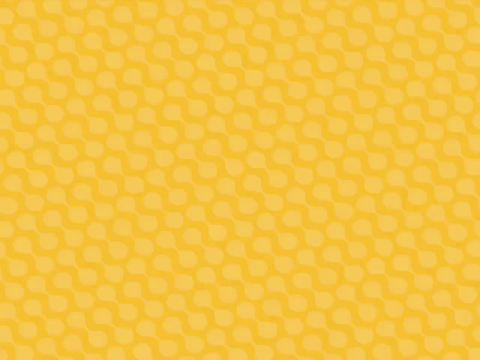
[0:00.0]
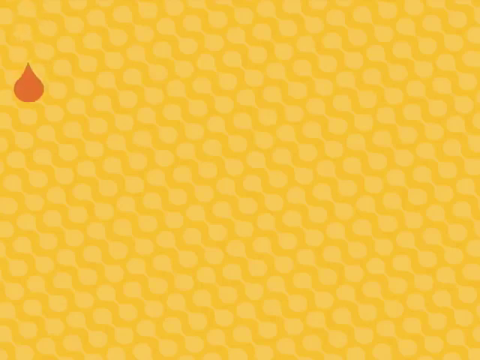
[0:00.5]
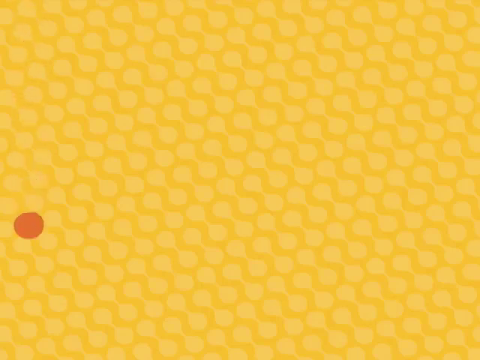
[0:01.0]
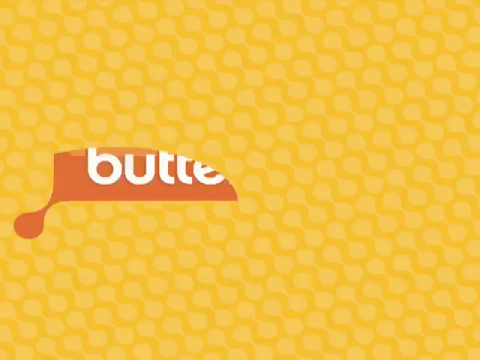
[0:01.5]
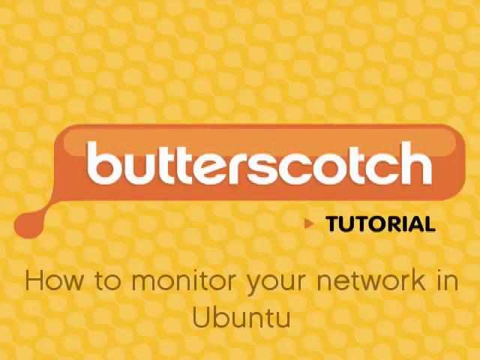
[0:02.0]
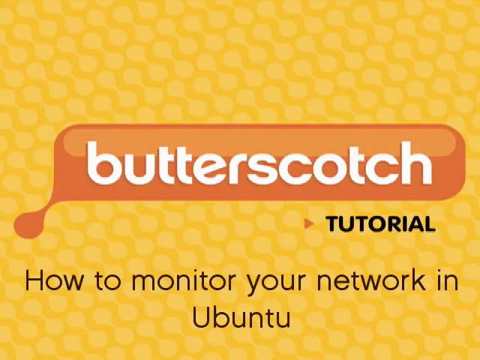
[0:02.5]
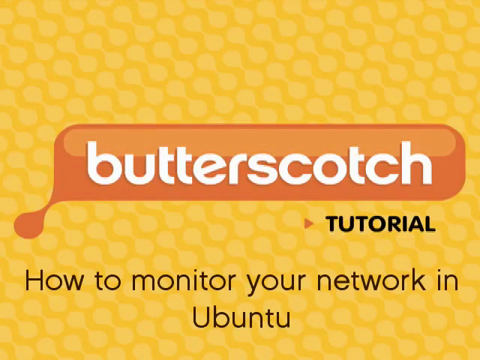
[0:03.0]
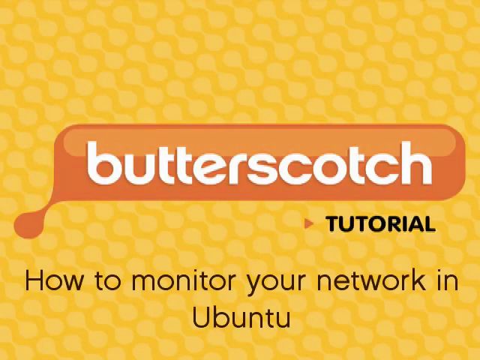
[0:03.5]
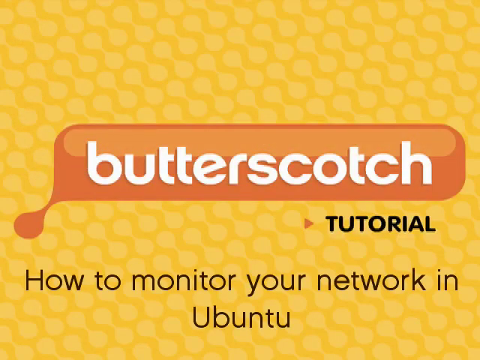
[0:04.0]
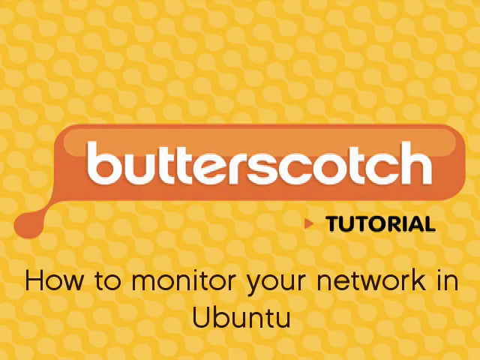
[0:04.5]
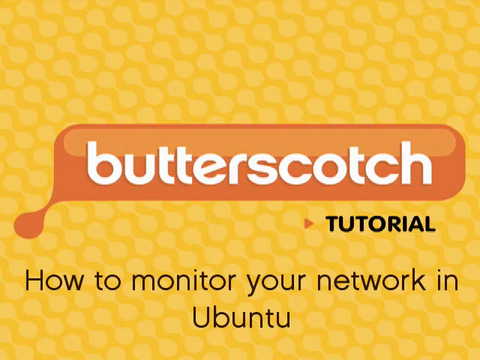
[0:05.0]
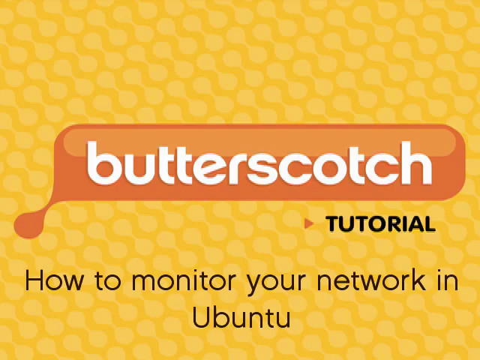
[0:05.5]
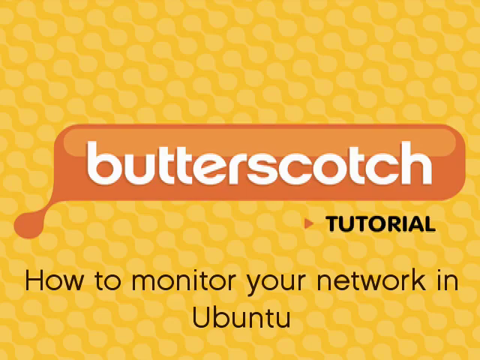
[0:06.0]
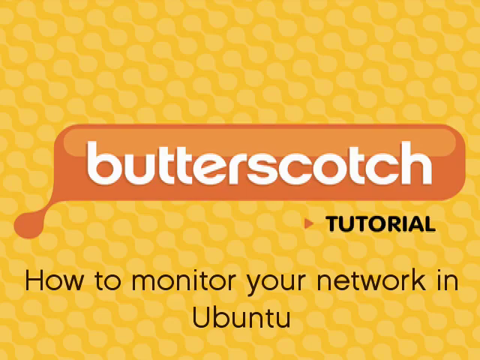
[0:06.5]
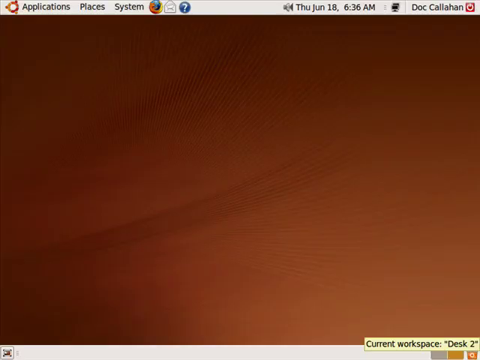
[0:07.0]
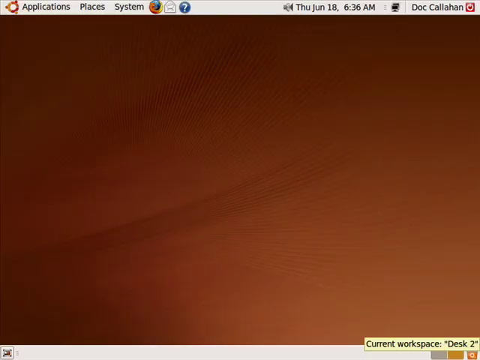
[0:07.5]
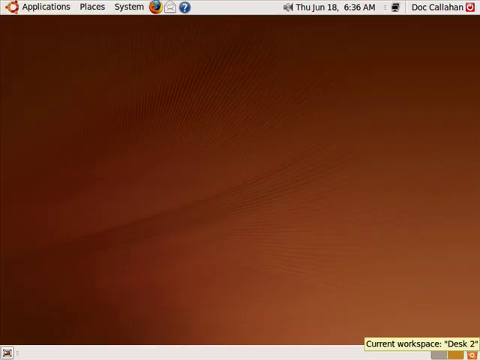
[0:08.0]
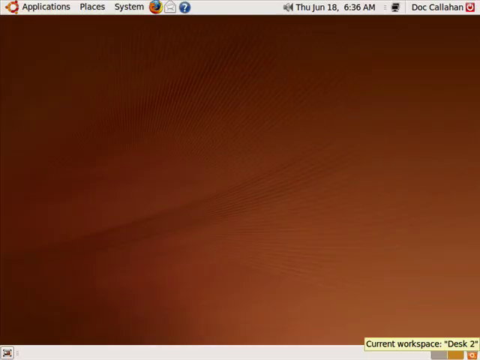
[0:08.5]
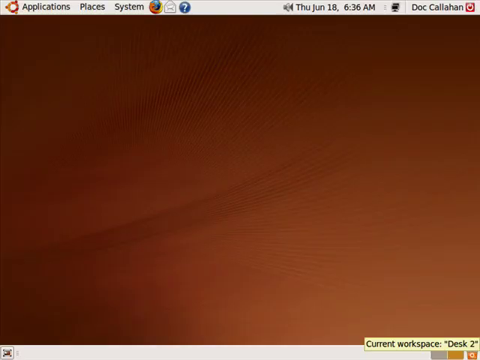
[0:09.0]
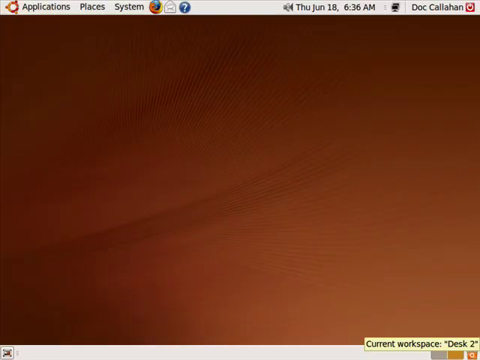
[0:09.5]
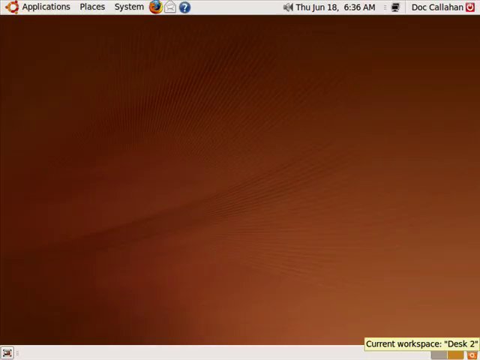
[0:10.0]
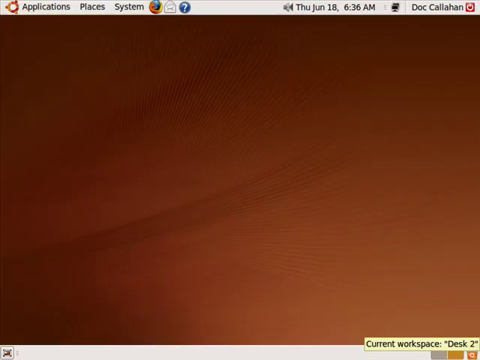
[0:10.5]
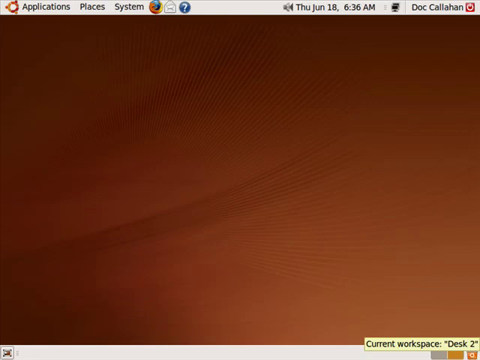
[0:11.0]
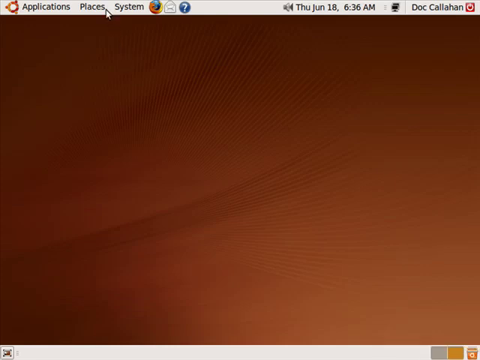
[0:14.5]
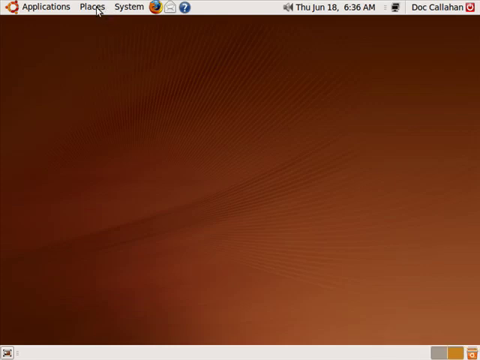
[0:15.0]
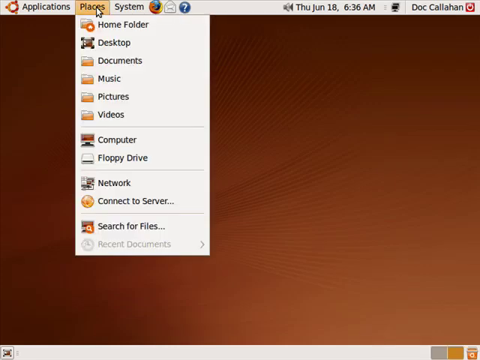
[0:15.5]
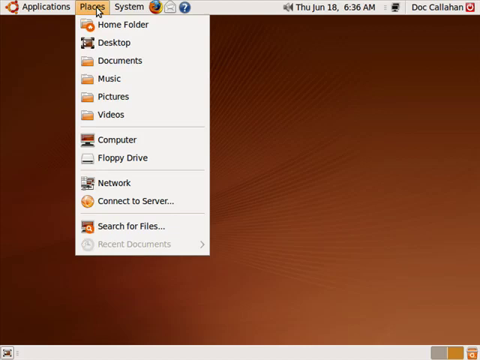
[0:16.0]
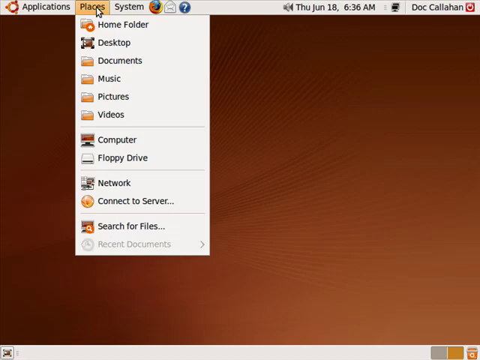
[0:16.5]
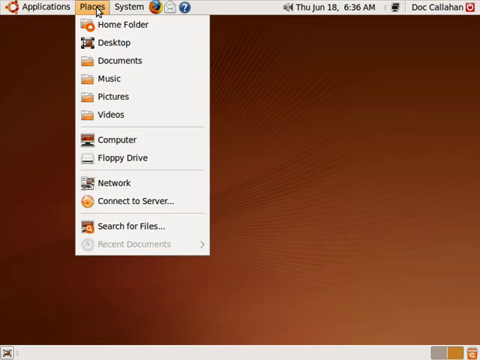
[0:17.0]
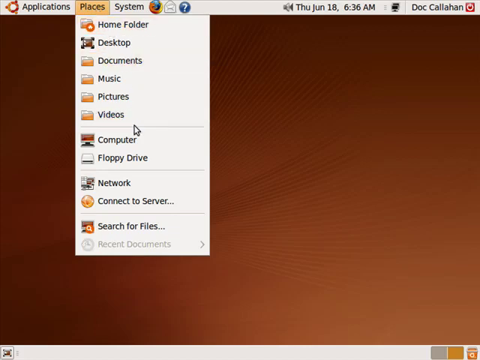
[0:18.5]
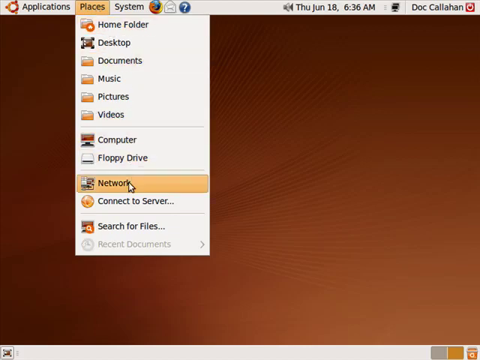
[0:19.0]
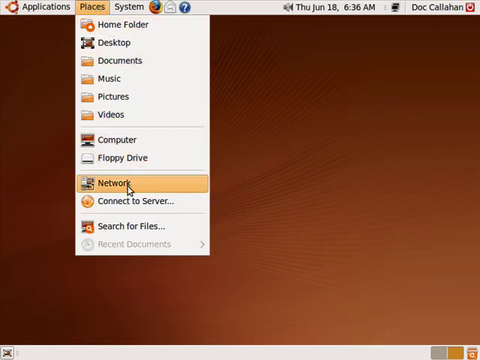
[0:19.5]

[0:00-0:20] The video opens with a Butterscotch ad, a tutorial on how to monitor your network on Ubuntu, the Linux system. The ad is a very striking yellow and looks like a honeycomb, a house of bees, as if it were an ad for something to do with bees. Next, the operating system appears with the Place button pressed, showing all the icons of the system, leading into the network part.